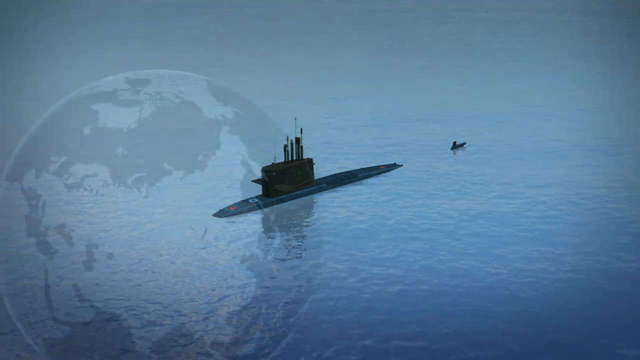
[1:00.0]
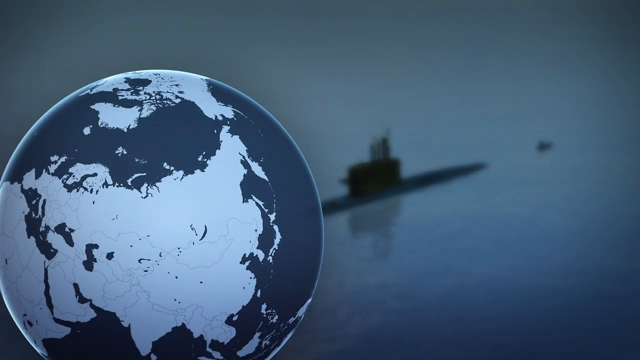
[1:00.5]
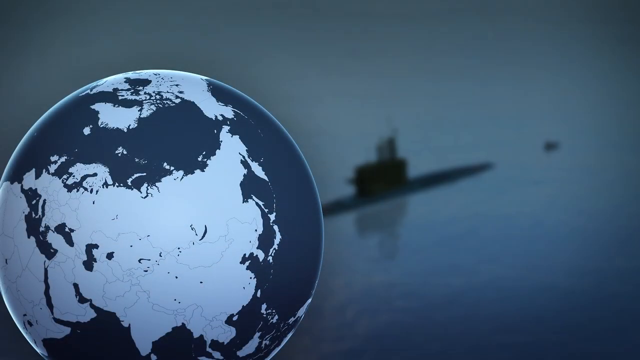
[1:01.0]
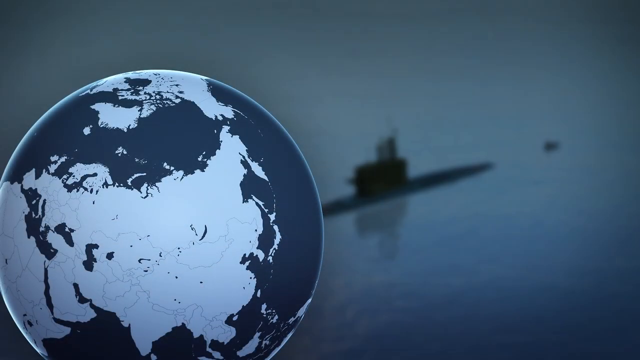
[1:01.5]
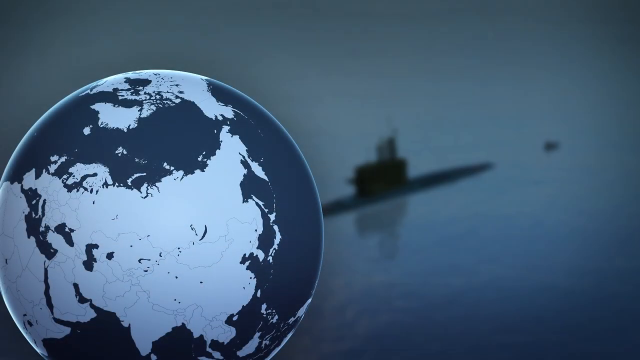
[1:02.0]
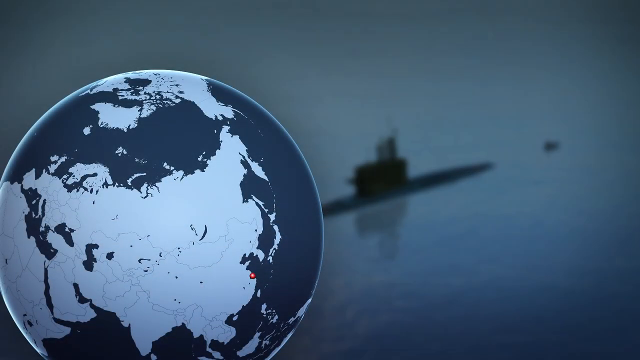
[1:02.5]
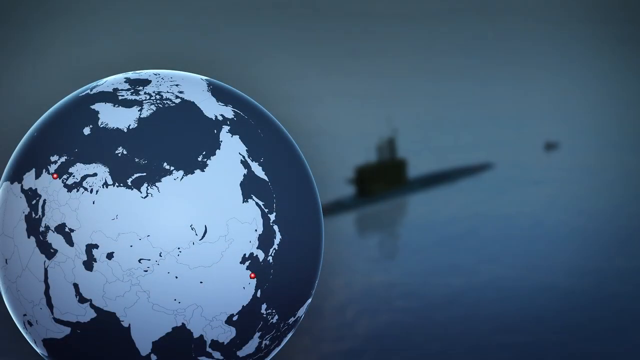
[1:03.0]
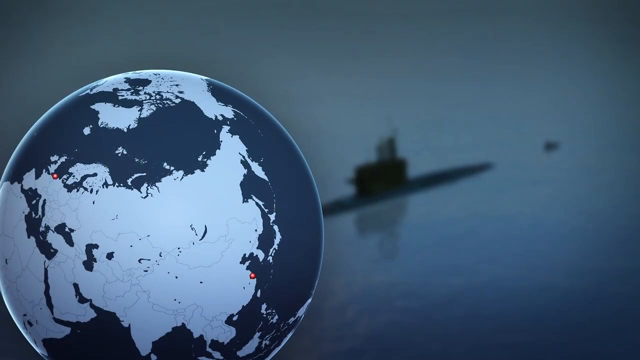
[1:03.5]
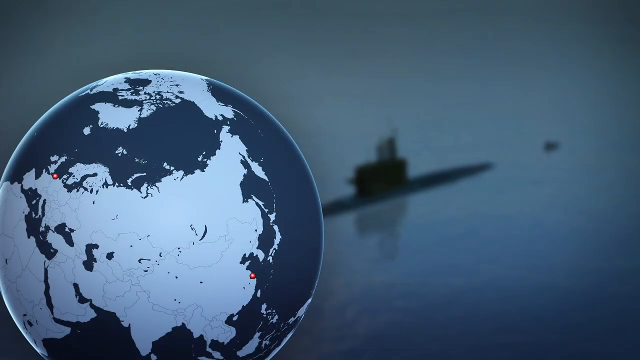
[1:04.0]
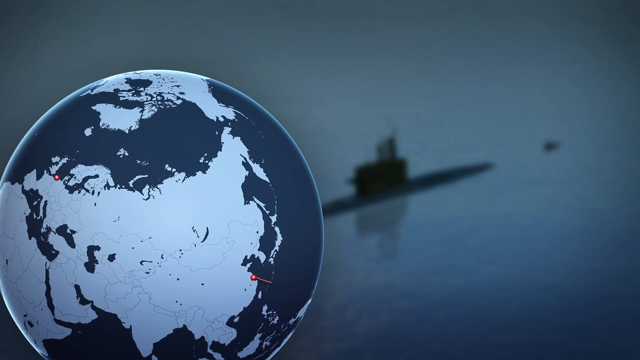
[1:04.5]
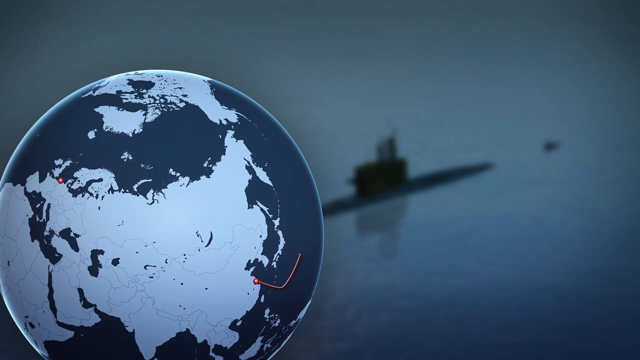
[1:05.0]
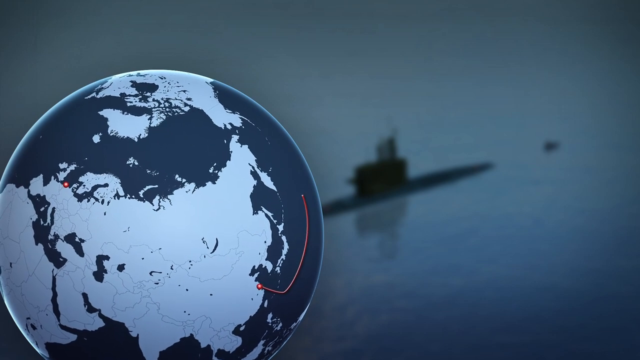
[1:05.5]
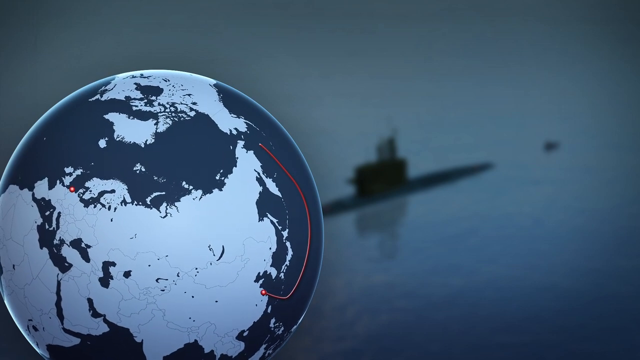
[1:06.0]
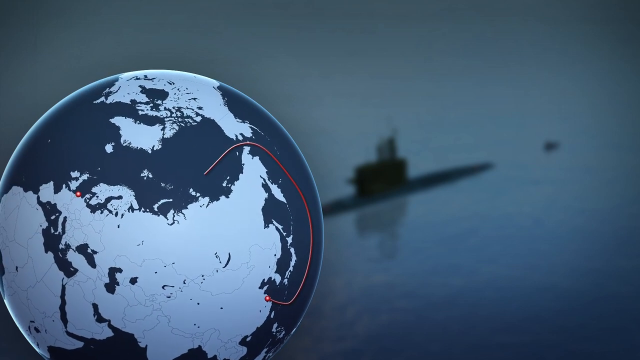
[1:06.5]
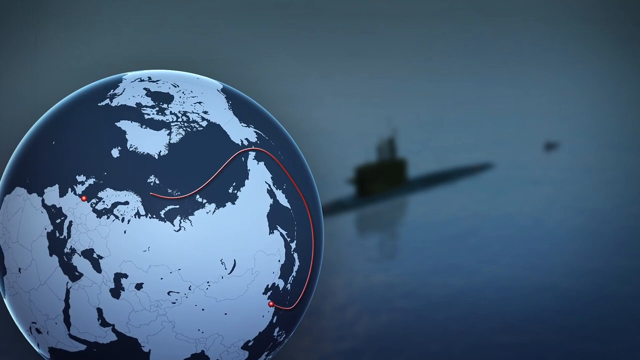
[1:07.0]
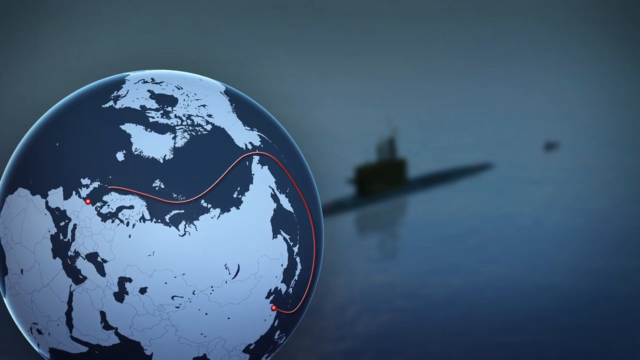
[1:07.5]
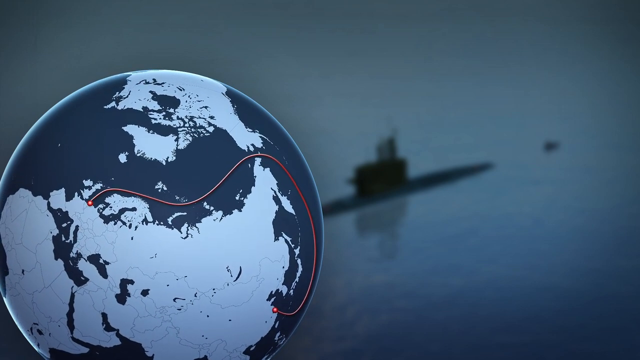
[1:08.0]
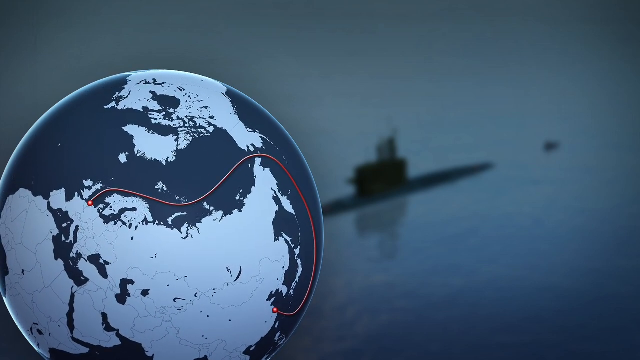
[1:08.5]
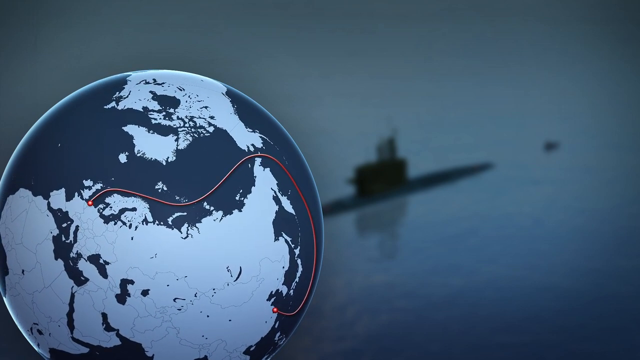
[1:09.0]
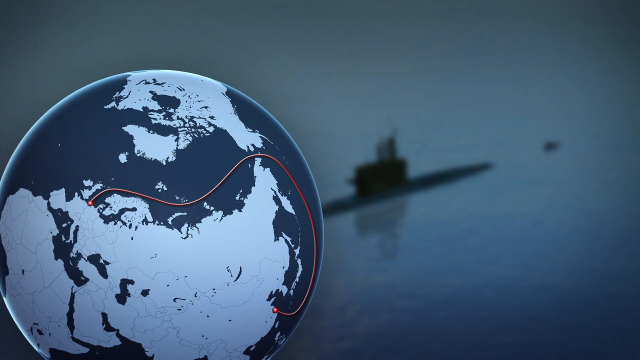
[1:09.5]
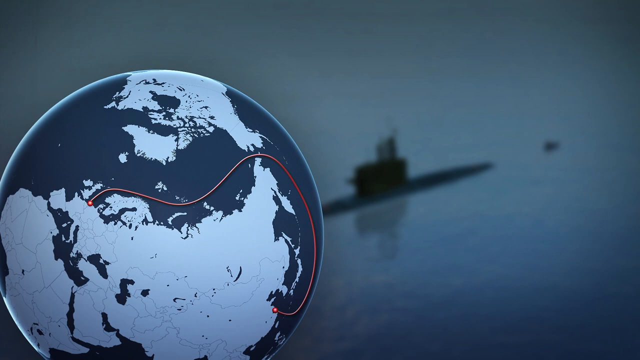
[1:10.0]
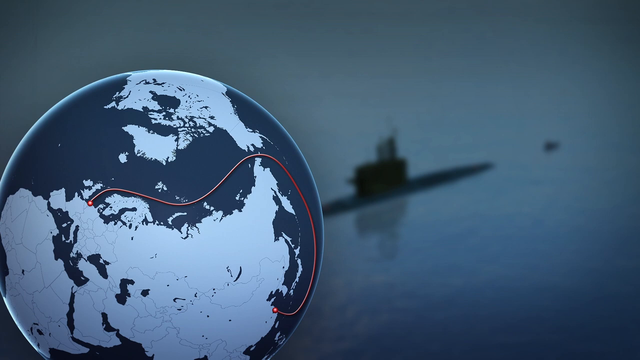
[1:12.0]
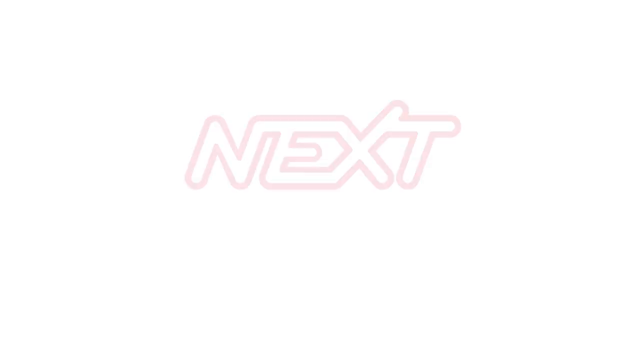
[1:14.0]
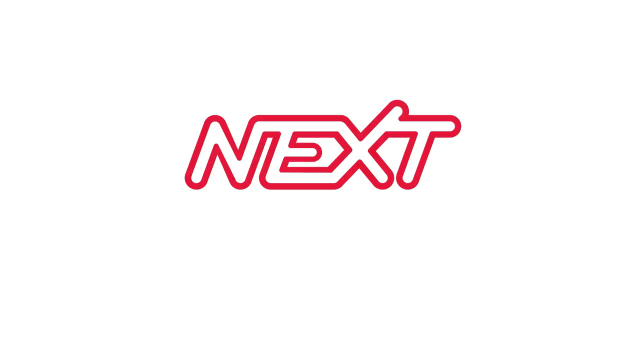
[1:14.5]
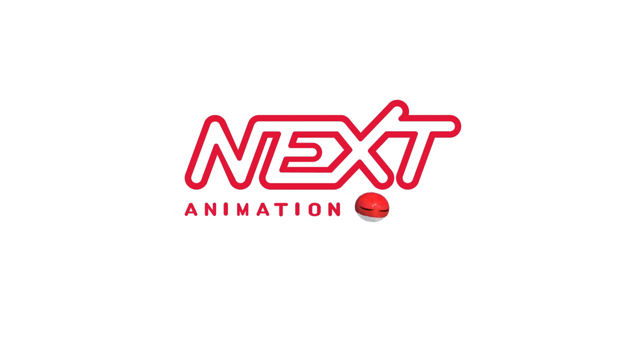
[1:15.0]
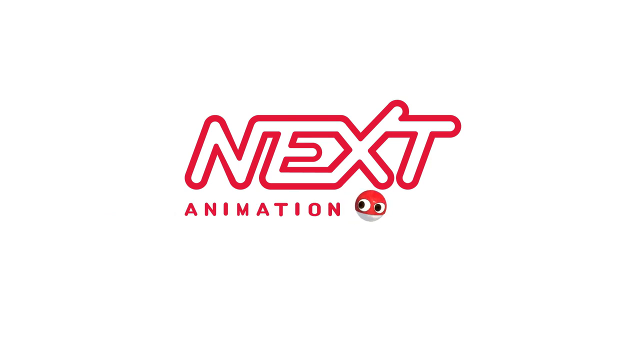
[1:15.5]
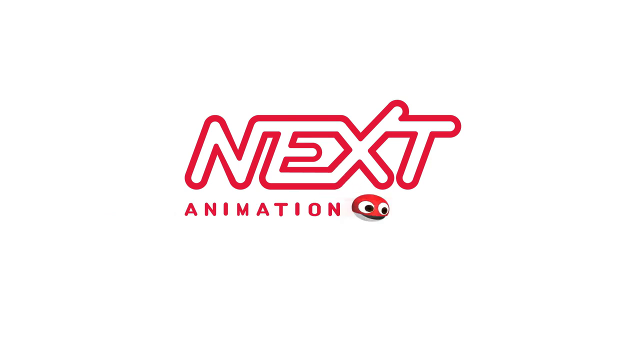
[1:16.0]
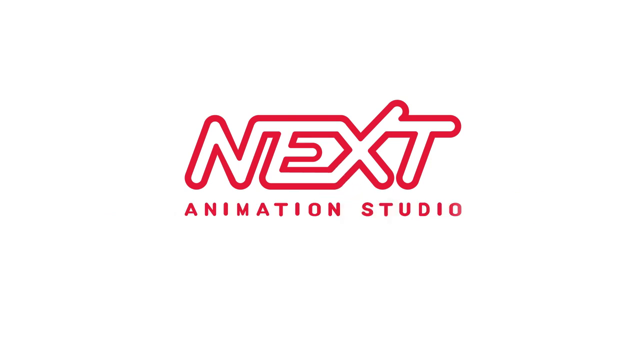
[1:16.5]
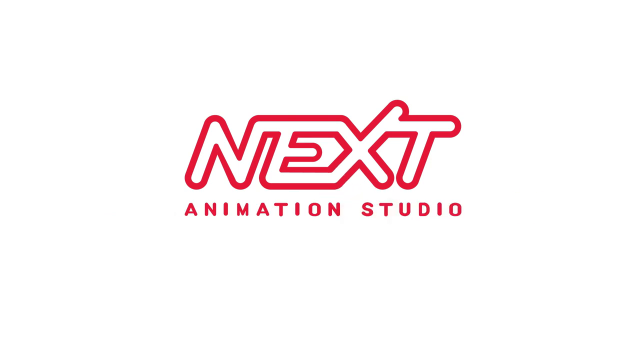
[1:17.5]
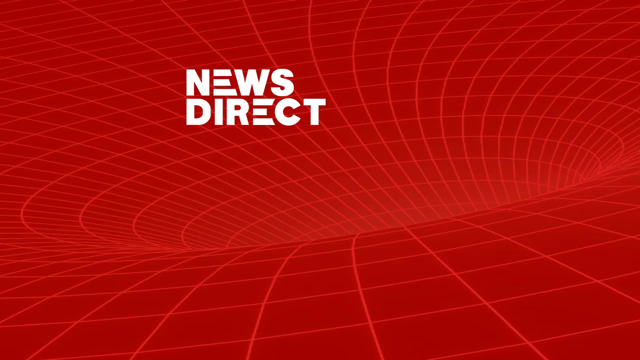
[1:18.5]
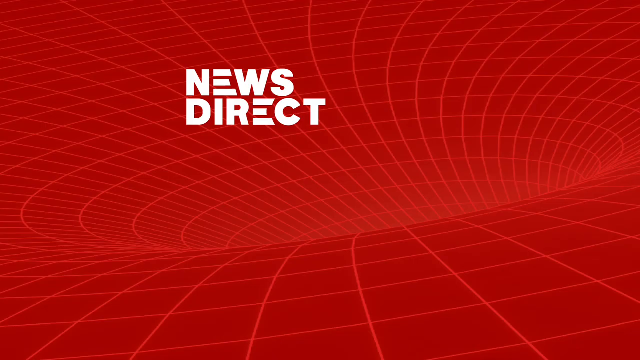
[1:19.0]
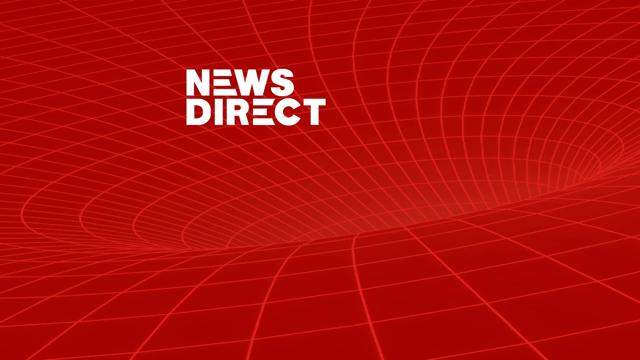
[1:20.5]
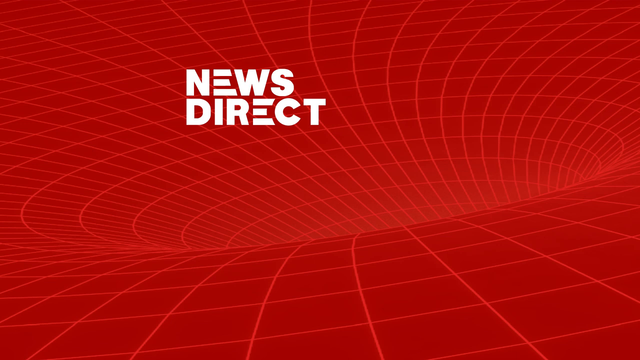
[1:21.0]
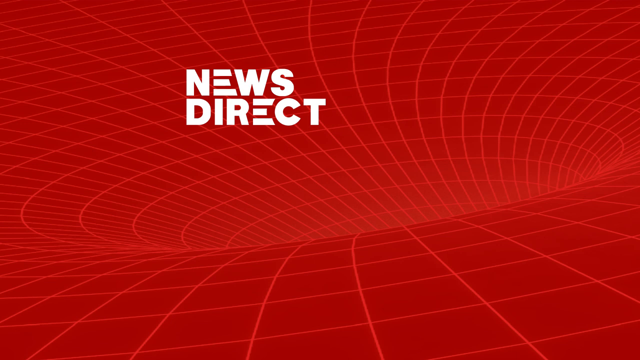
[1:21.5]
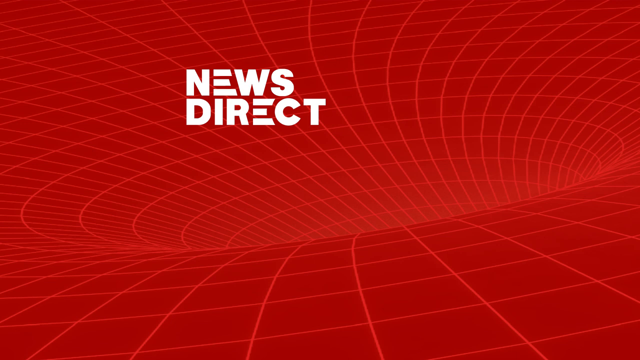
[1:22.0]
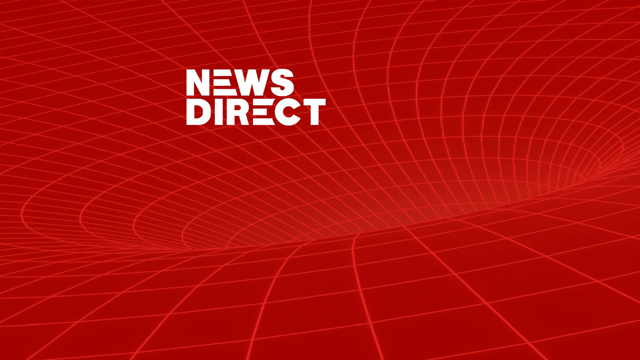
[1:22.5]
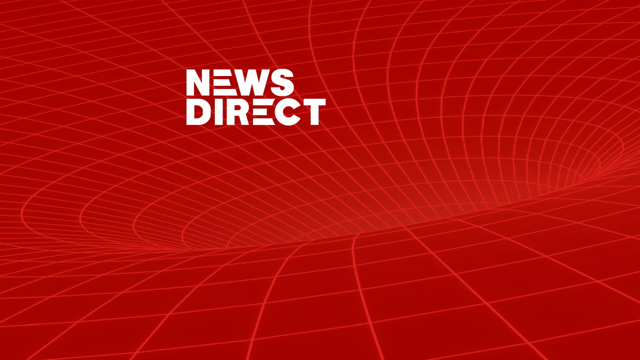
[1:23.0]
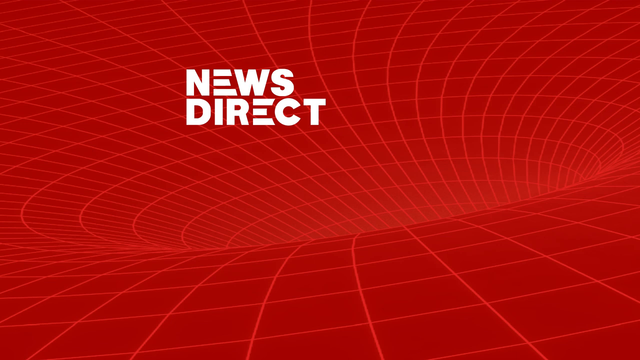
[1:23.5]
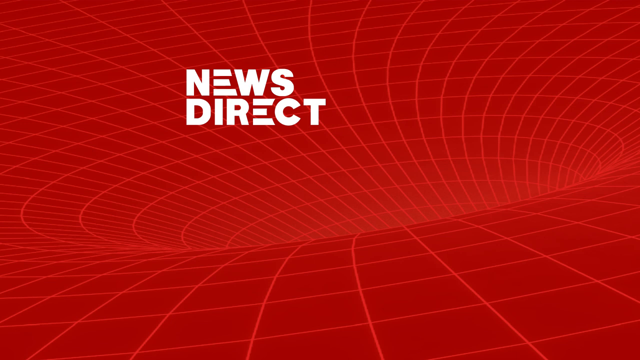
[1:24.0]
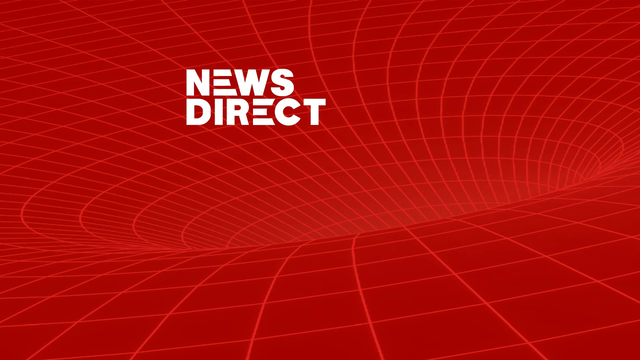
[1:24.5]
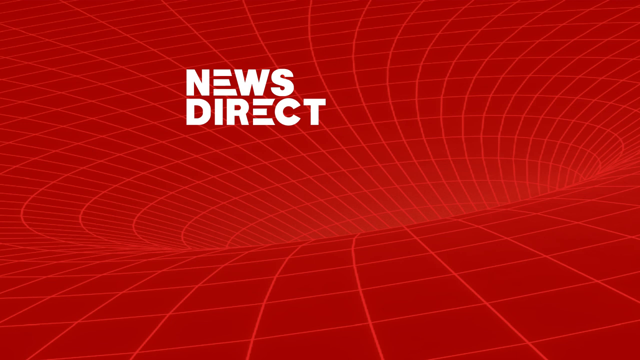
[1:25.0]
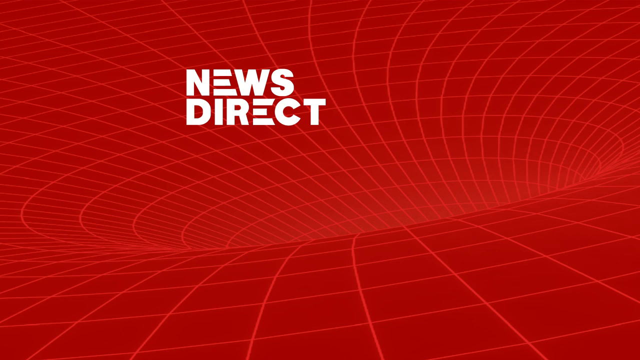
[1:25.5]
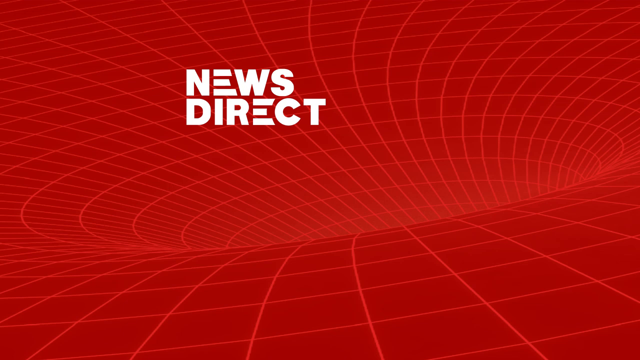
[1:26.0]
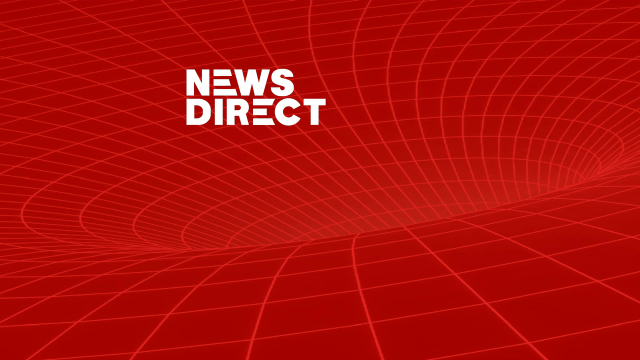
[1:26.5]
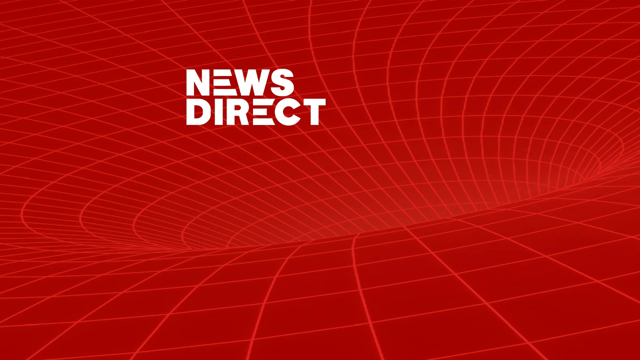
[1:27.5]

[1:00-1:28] The submarine in the water fades and moves towards the right-hand side of the screen, still visible but no longer the focus. The focus is now the globe, brought back up in black and pale blue on the left-hand side of the screen. It starts to move slightly, and a red arrow and a red dot point at a specific place on the map. The red arrow continues around the land through the sea, cuts round towards the west, and continues until it reaches another point on the map where another red circle lands, seemingly showing the route of the submarine. The screen then goes white, and red text with a red outline and white inside reads "NEXT", with "ANIMATION" underneath in smaller red capital letters. A small logo of a red character moves to the right of the screen, revealing "STUDIO" in red writing. Finally, a red background shows white writing that reads "NEWS DIRECT", with pale red lines shooting across the screen.